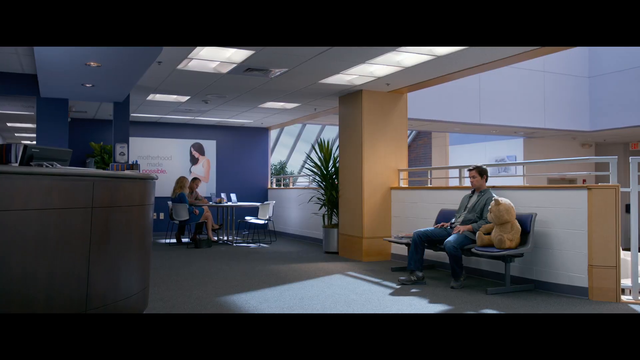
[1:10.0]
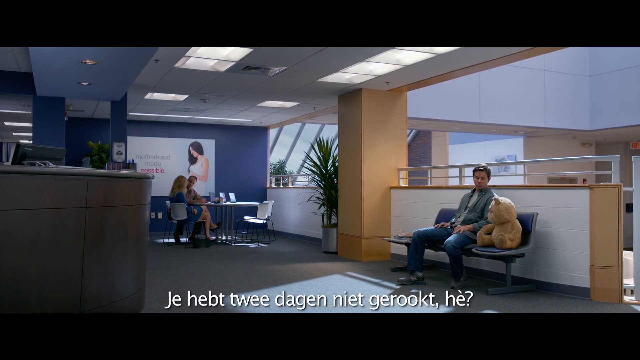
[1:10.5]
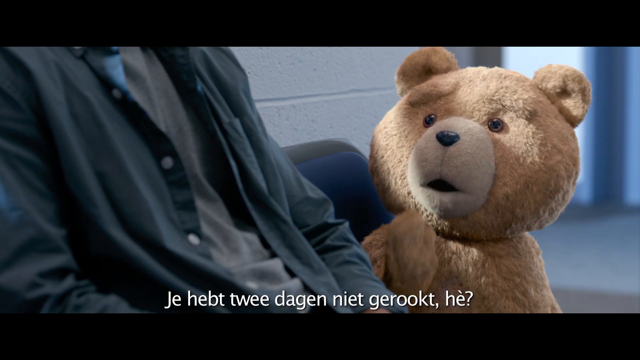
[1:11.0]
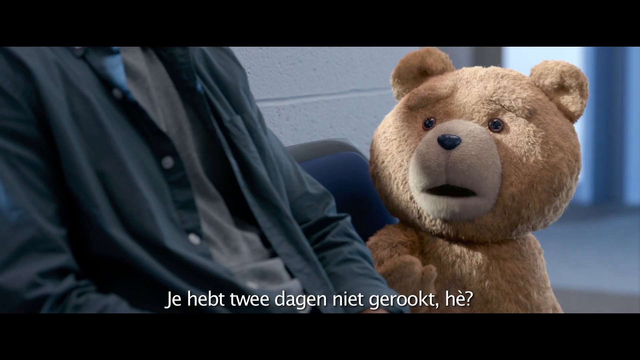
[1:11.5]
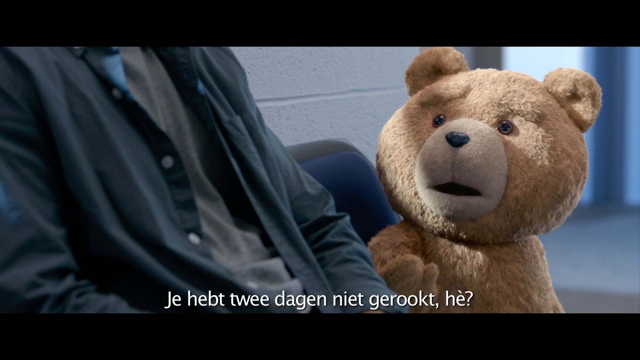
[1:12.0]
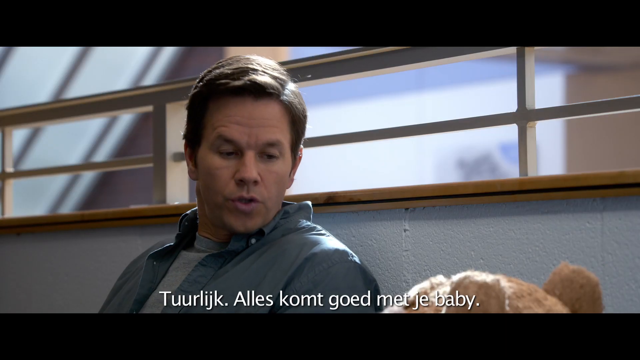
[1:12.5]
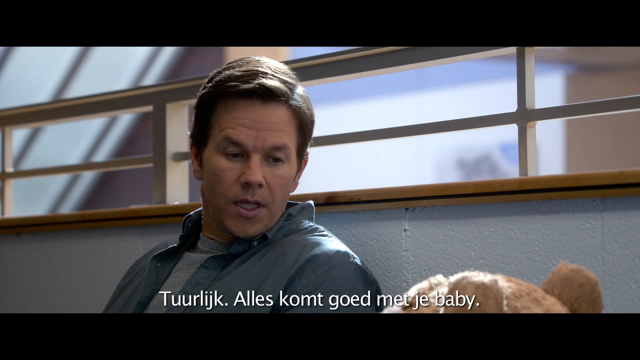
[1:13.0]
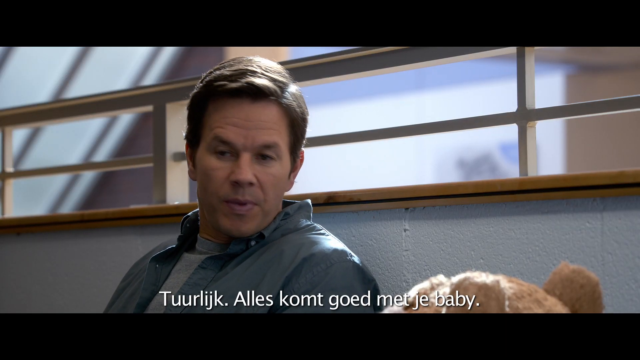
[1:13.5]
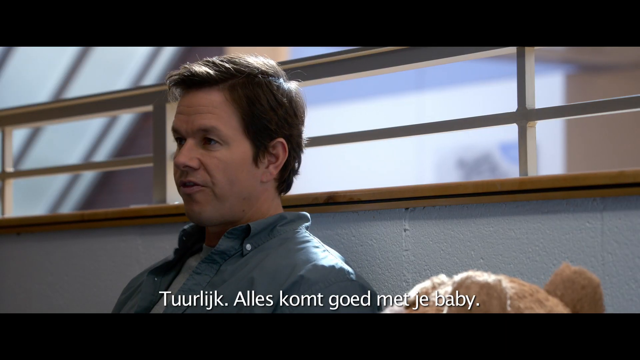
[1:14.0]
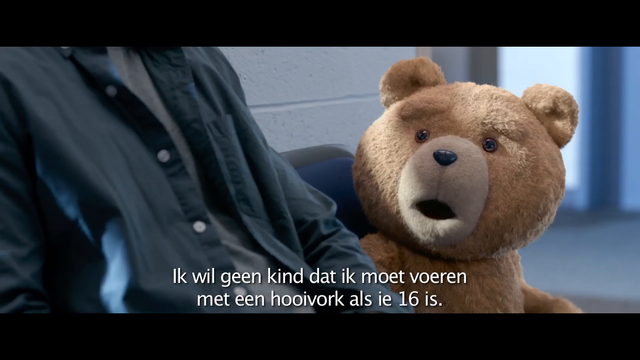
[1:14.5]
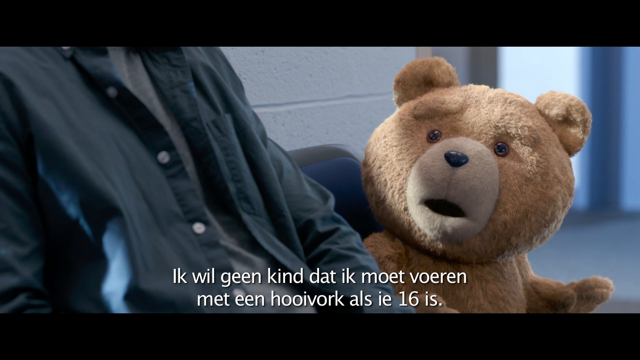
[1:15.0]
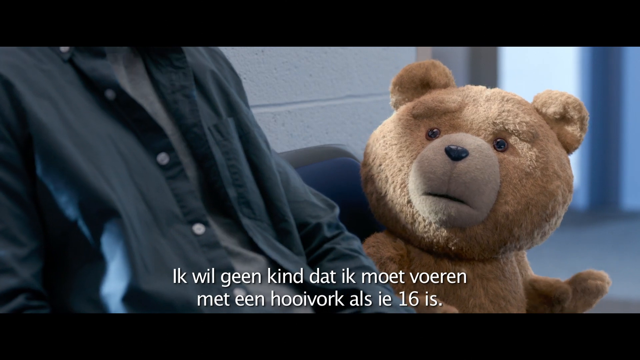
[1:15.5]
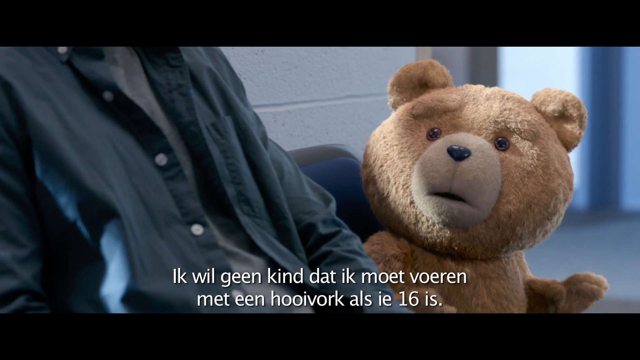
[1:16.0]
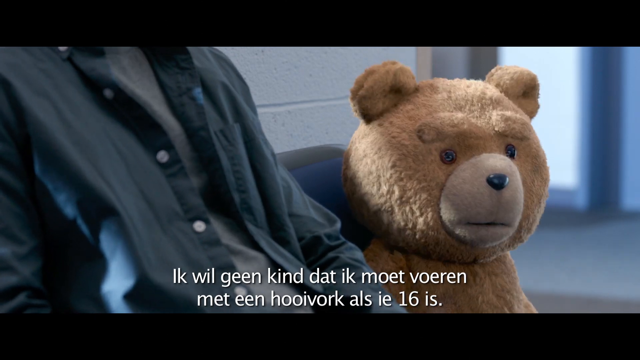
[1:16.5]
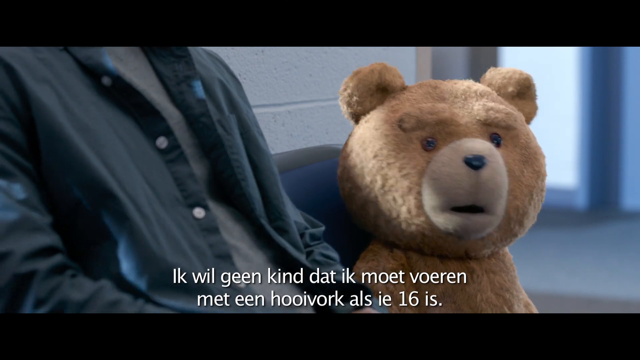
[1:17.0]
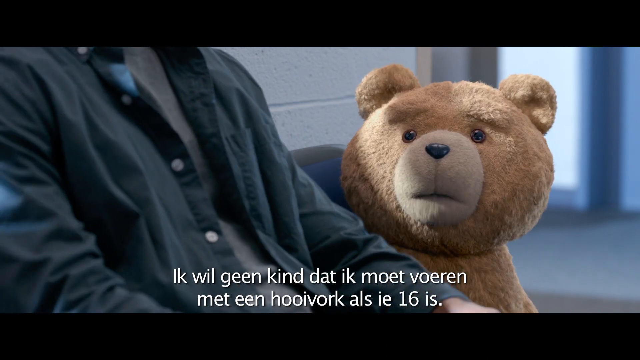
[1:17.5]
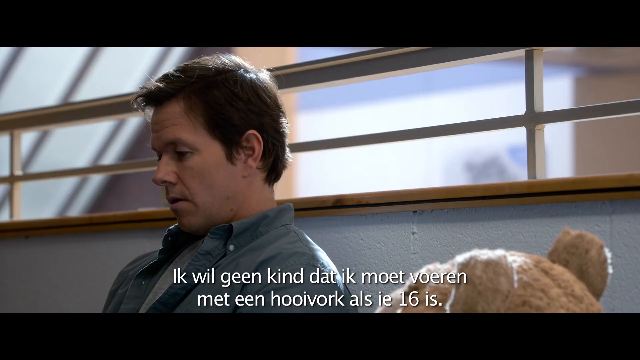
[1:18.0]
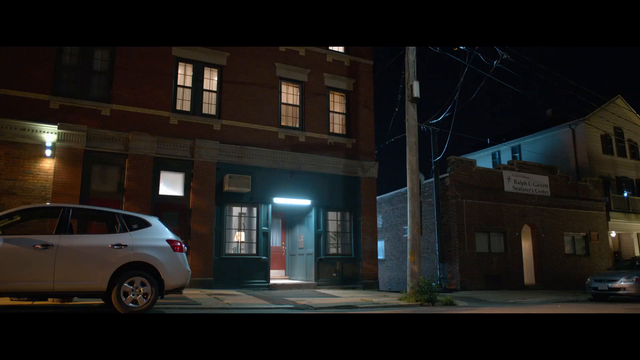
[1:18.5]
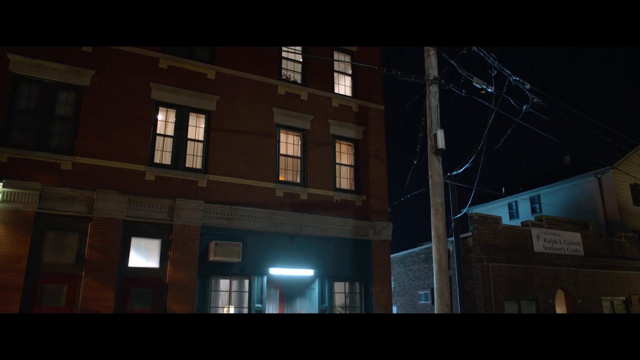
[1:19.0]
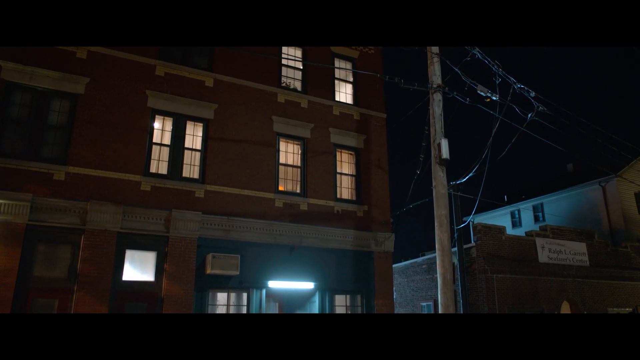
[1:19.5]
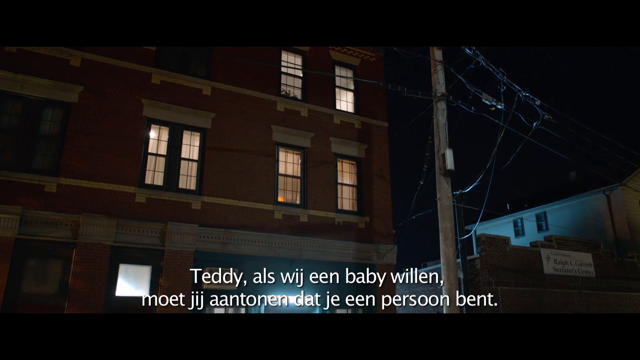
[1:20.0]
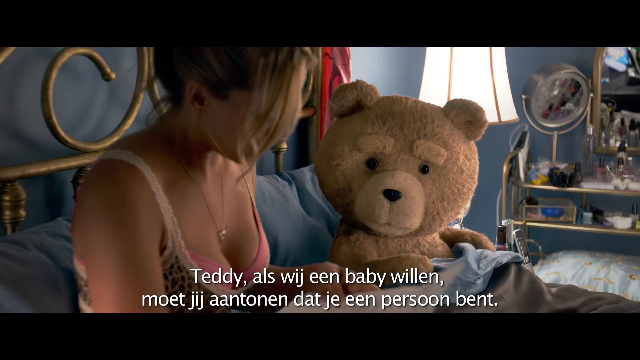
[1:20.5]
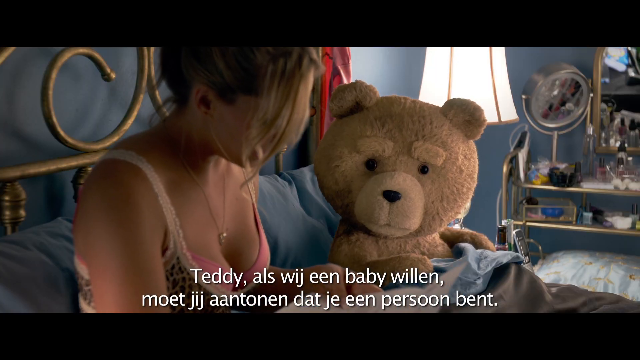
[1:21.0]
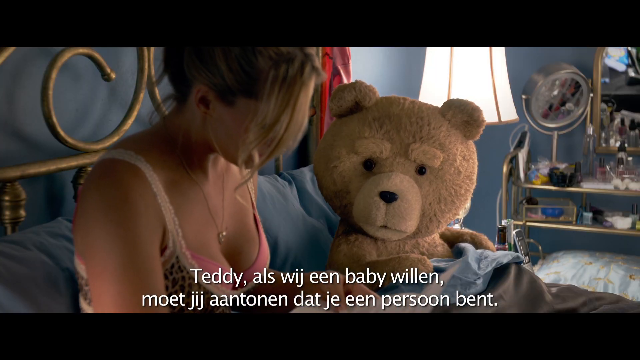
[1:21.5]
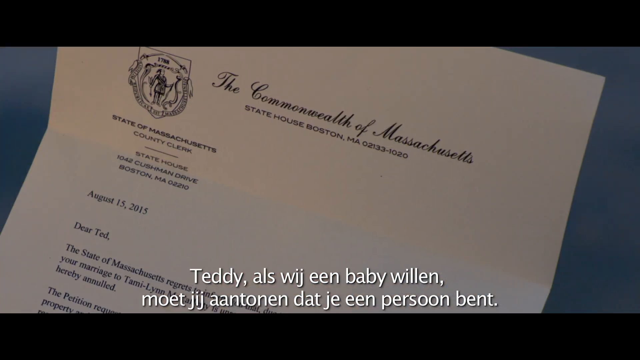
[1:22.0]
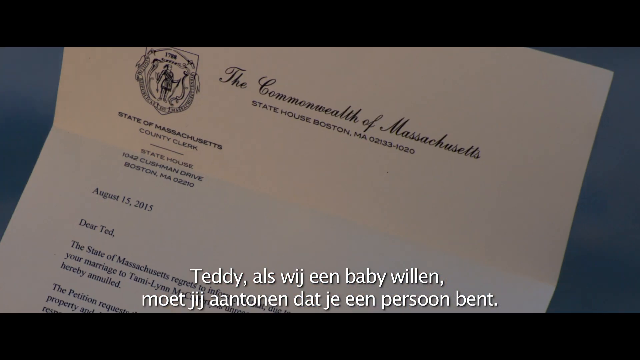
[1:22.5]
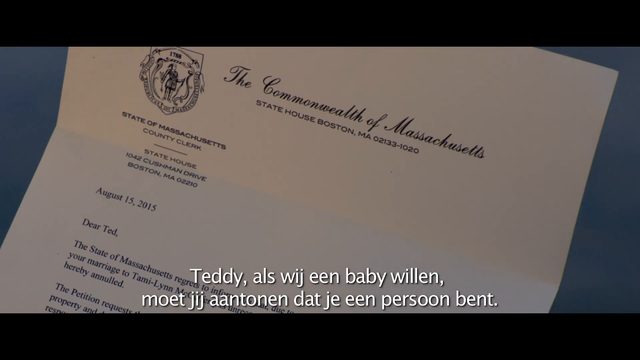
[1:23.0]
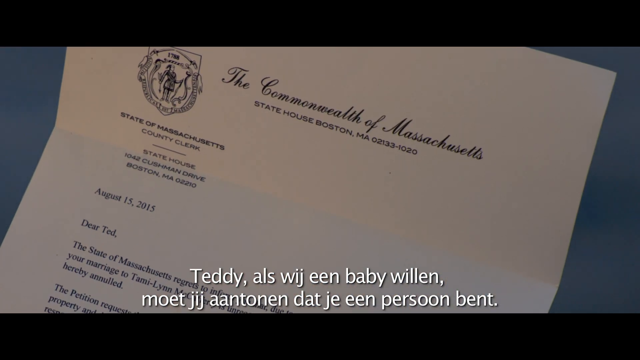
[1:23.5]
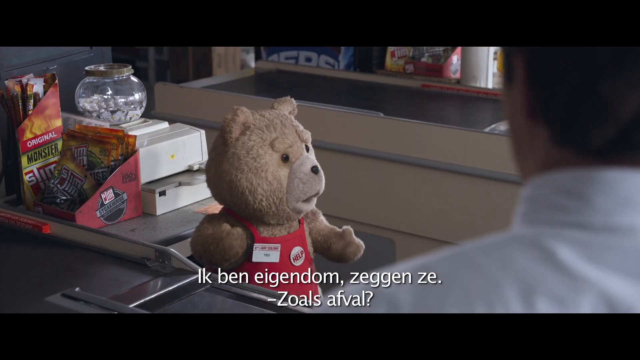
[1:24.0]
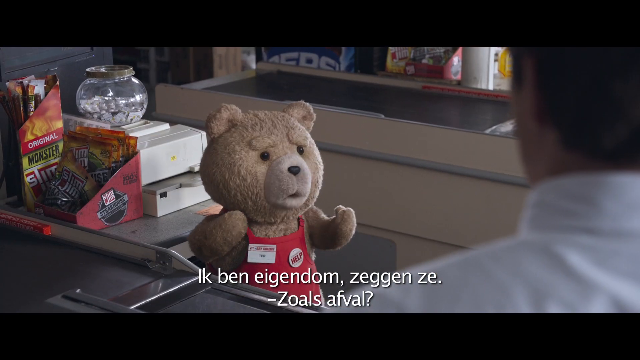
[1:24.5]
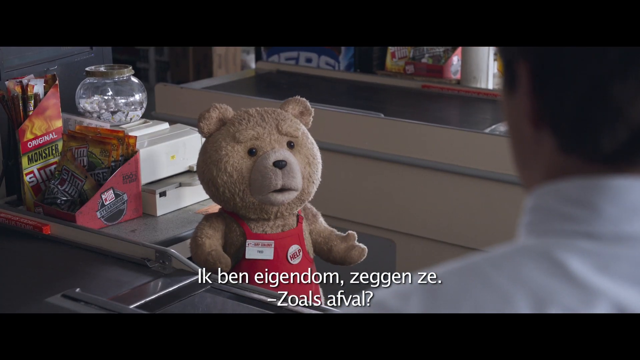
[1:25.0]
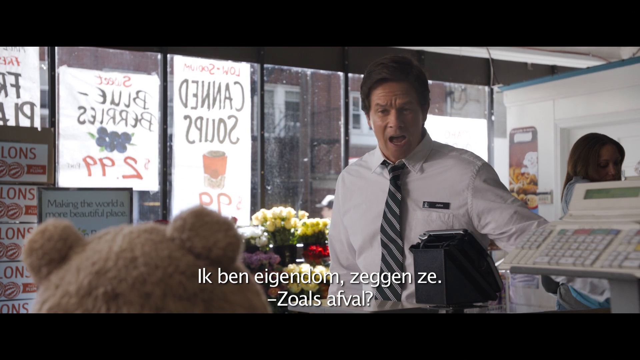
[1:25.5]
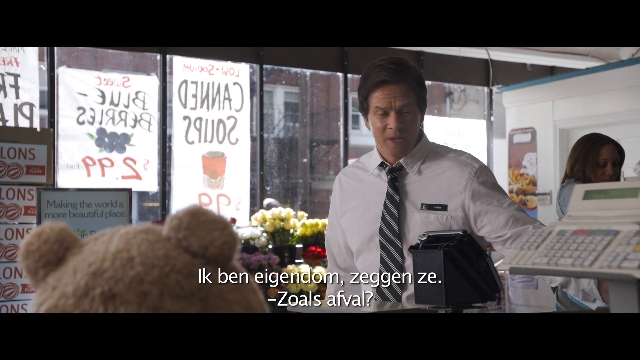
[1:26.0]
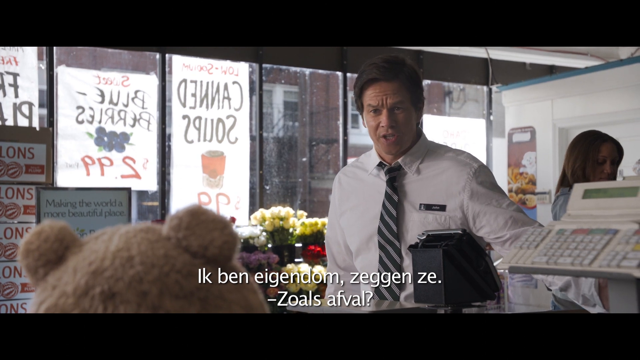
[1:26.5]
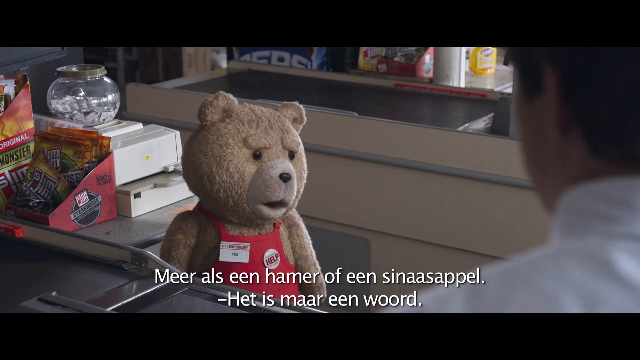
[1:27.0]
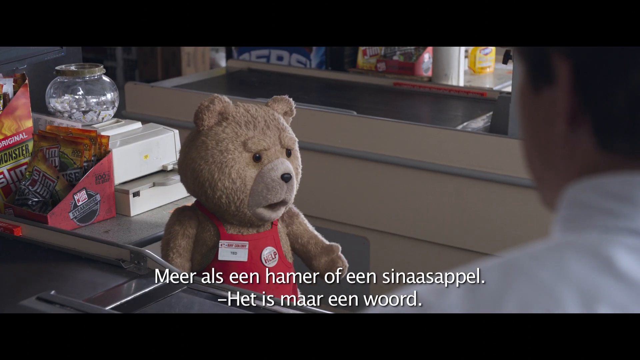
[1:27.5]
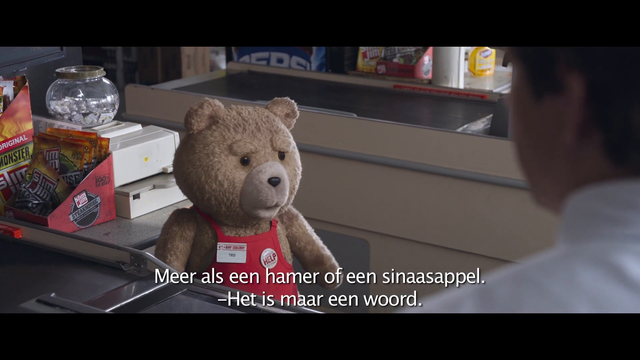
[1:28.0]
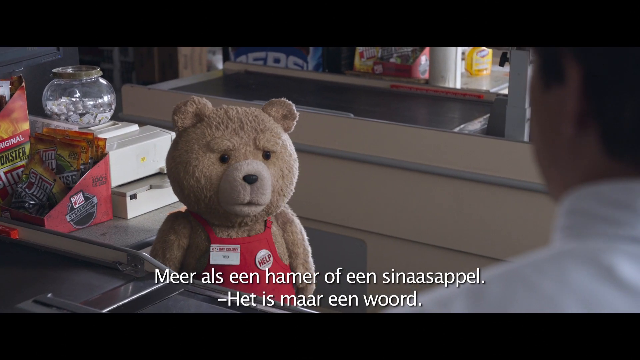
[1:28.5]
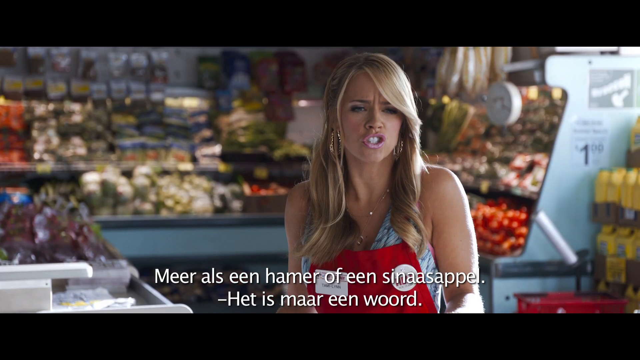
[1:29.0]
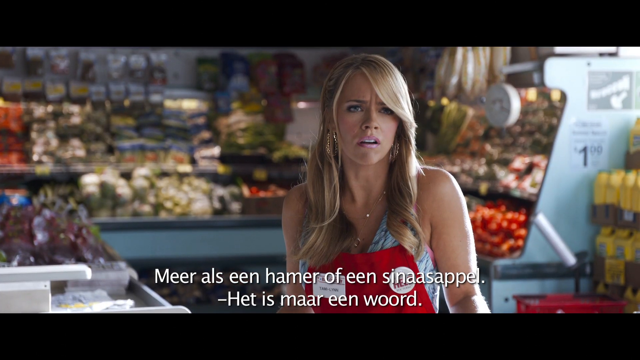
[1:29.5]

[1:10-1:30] The two appear to be in the clinic's waiting room, talking to one another in back-and-forth shots, with the white German subtitles still at the bottom. Next is an outside view of an apartment building at night, its windows lit from inside. Then the teddy bear on the right and a woman on the left sit in bed reading a letter that the woman holds. A view of the letter shows "the Commonwealth of Massachusetts" in black cursive at the top, with a small official-looking symbol to the left, in a letter format. The talking teddy bear is then shown working at a grocery store in a red apron. A shot from his perspective shows Mark Wahlberg checking out some food, wearing a white button-down shirt and a blue and gray diagonally striped tie. They talk back and forth, and Mark Wahlberg looks a bit upset. Then a woman who works there appears, also in a red apron, with long blonde hair, side-swept bangs on the left side, and what looks like a blue patterned tank top or spaghetti strap dress.